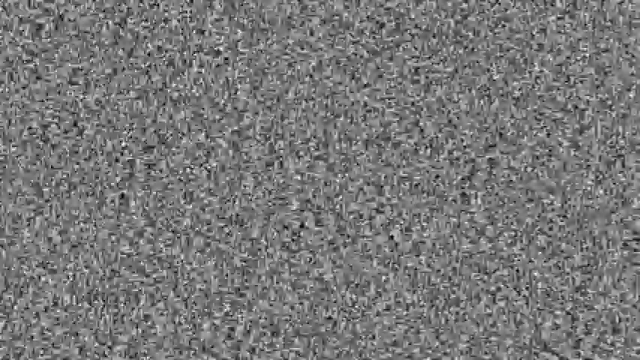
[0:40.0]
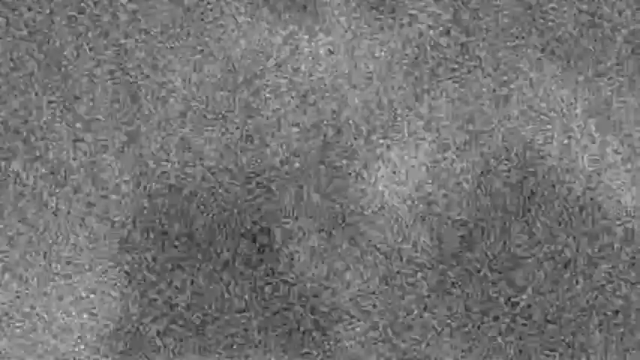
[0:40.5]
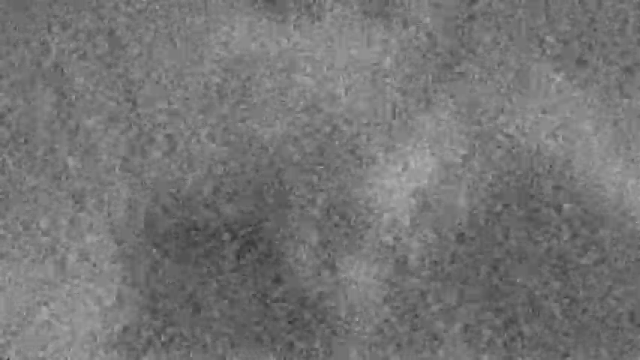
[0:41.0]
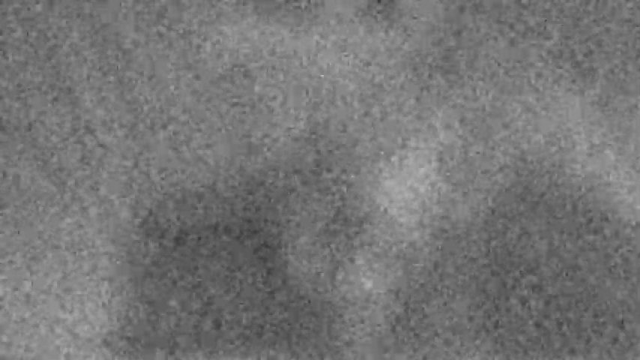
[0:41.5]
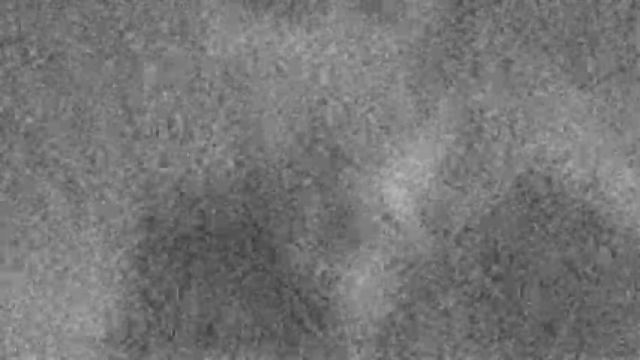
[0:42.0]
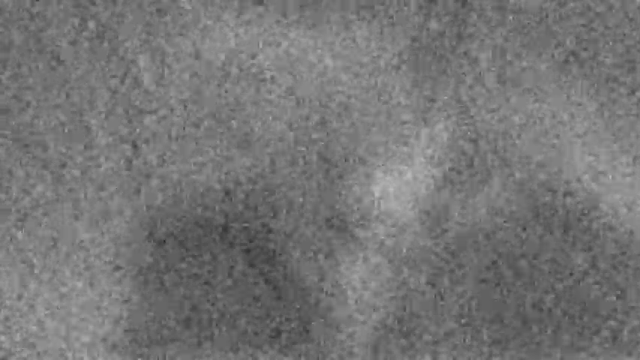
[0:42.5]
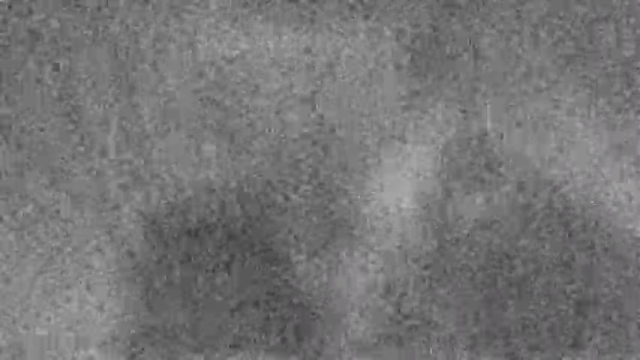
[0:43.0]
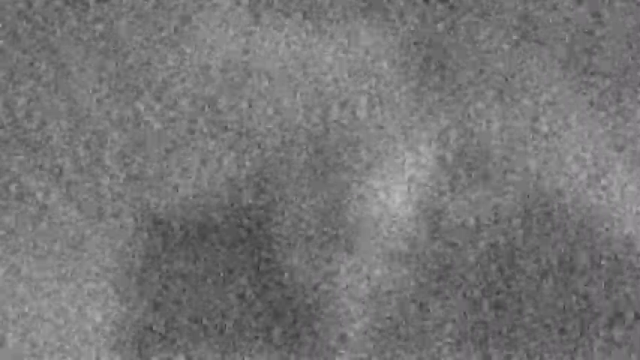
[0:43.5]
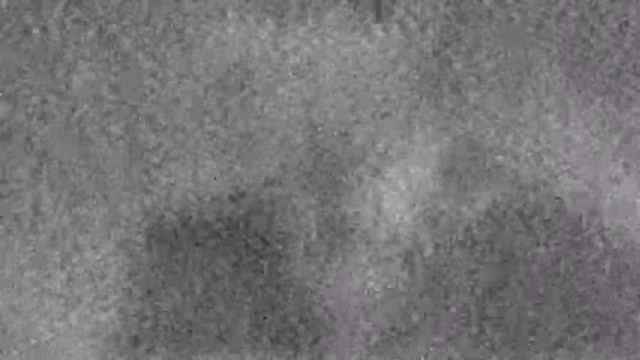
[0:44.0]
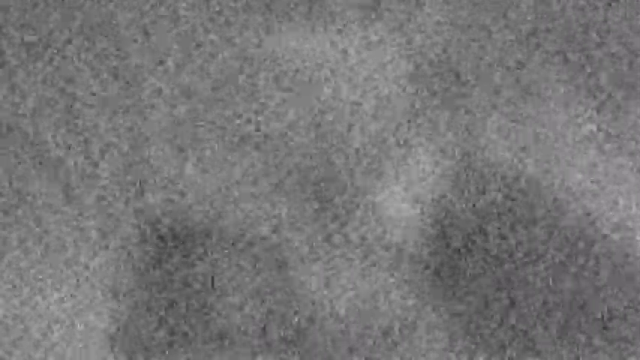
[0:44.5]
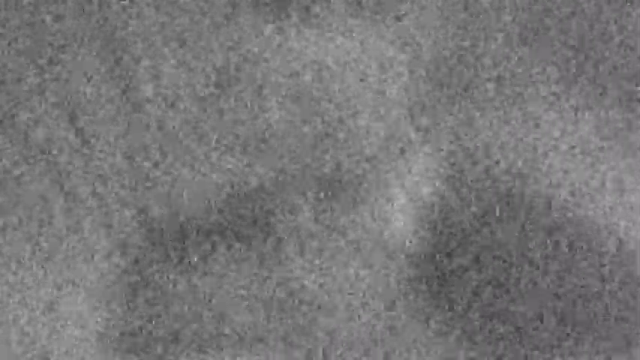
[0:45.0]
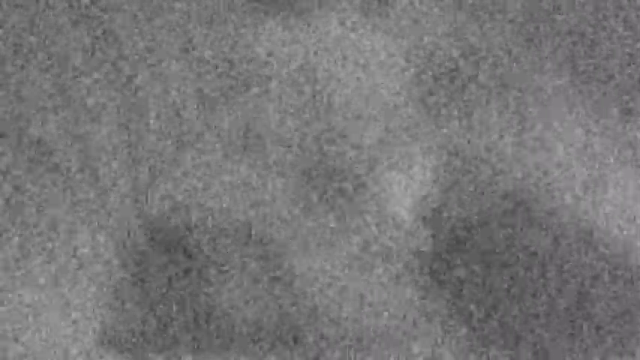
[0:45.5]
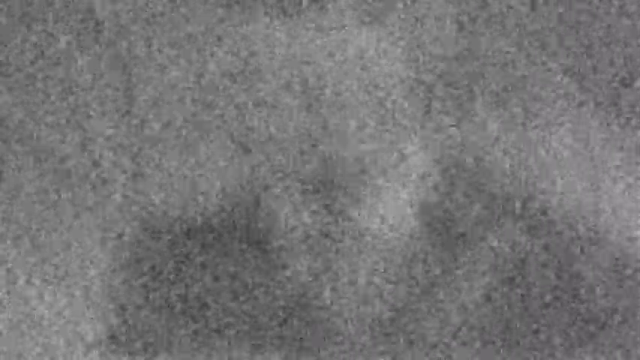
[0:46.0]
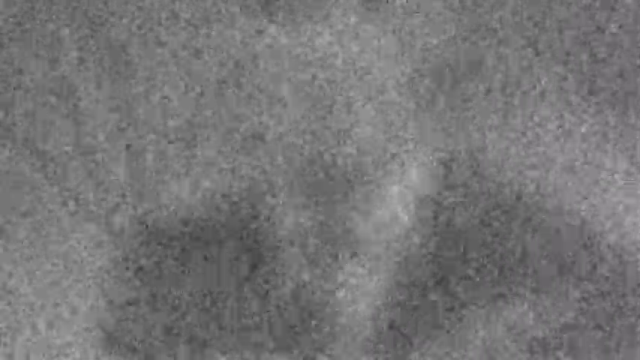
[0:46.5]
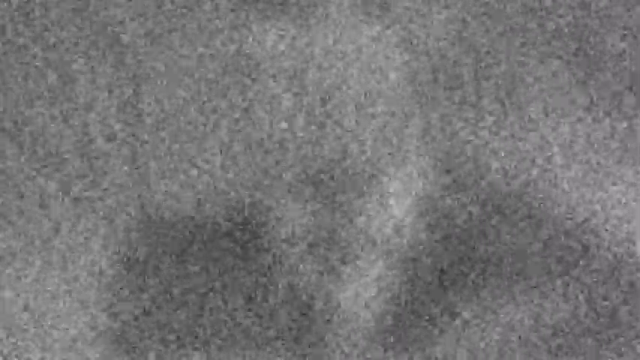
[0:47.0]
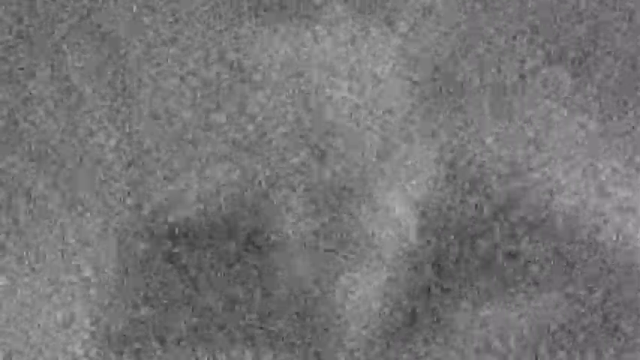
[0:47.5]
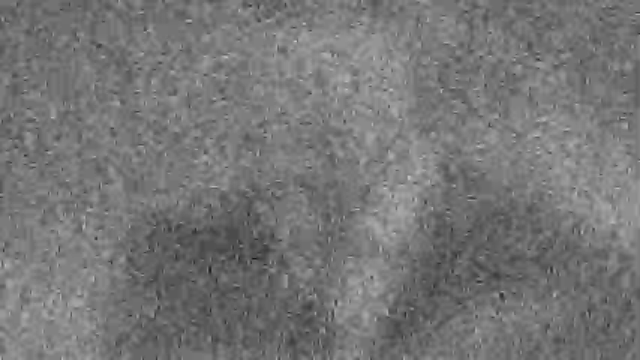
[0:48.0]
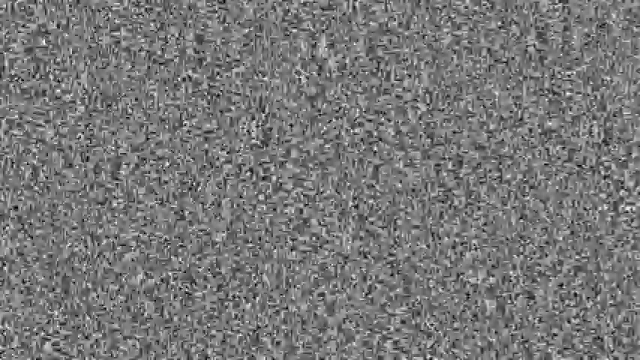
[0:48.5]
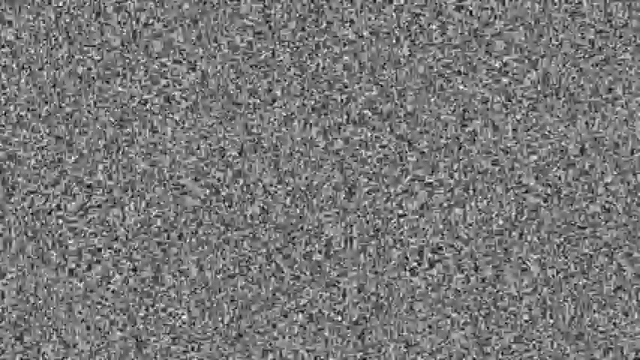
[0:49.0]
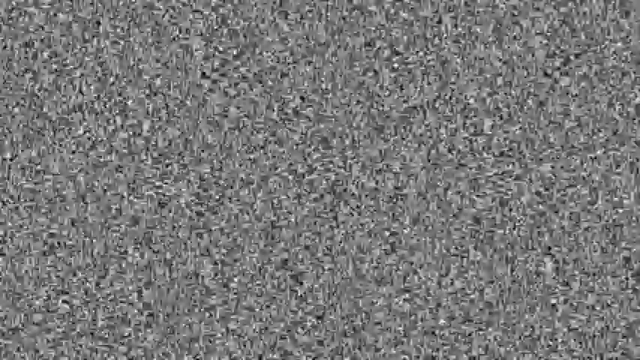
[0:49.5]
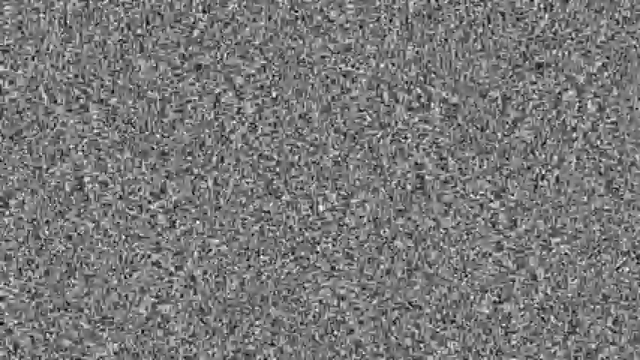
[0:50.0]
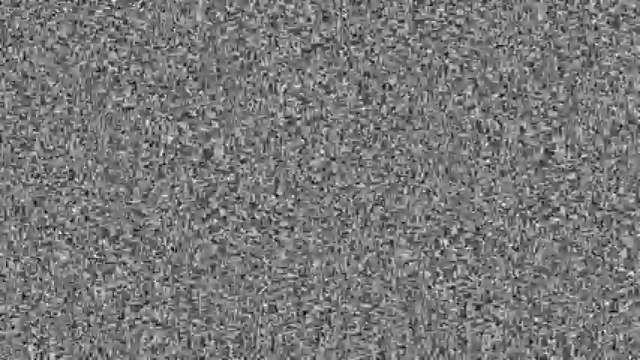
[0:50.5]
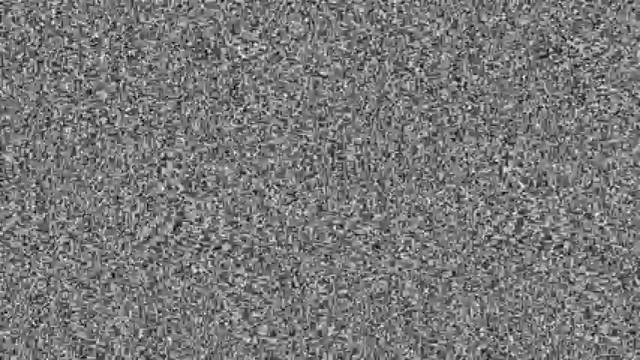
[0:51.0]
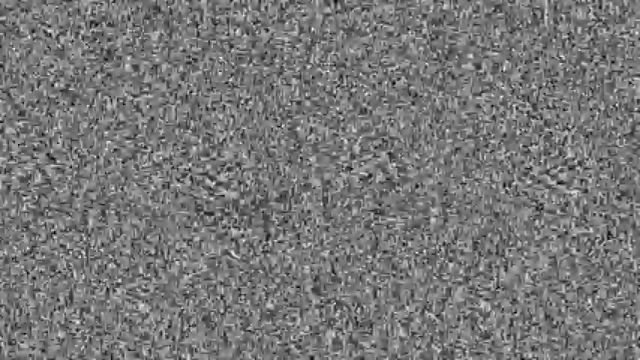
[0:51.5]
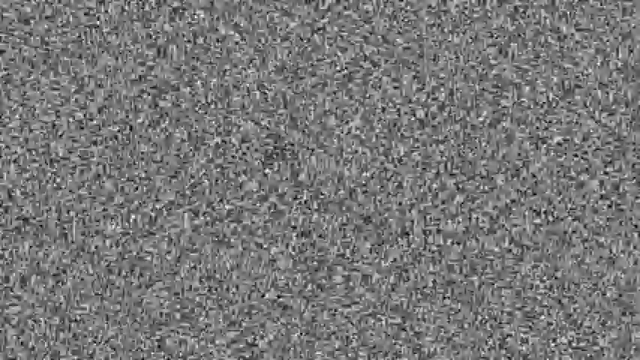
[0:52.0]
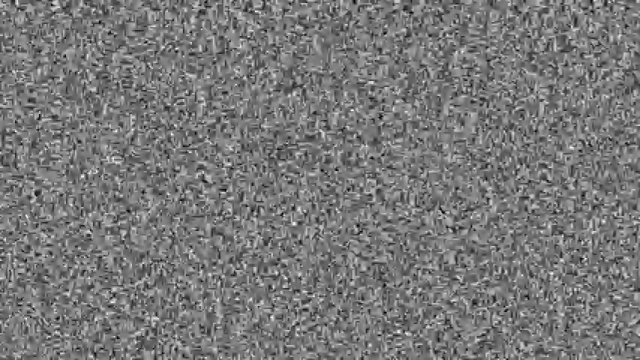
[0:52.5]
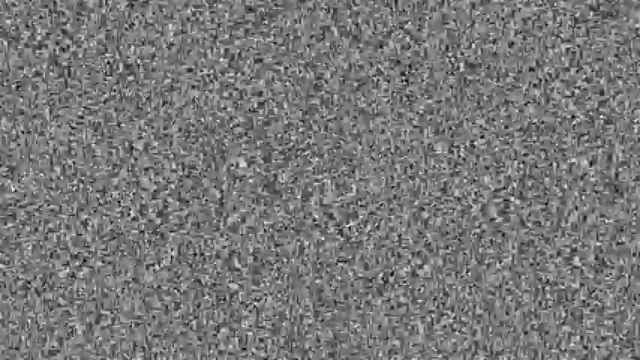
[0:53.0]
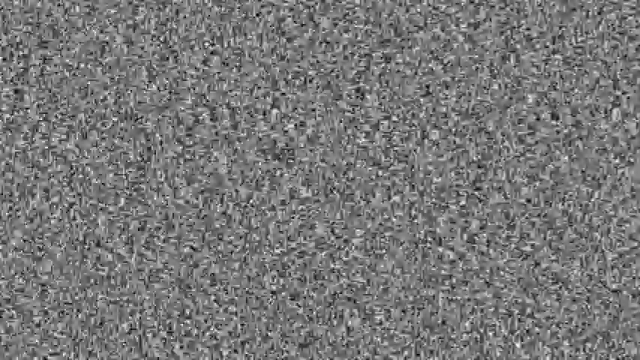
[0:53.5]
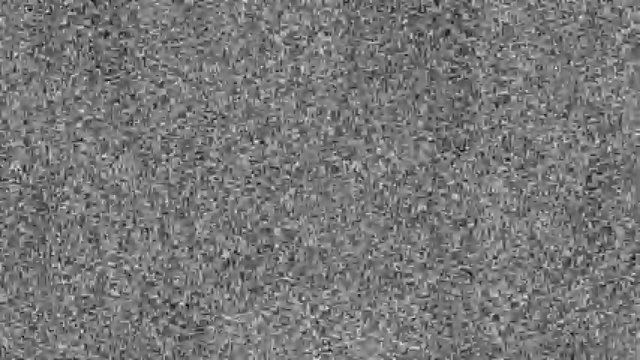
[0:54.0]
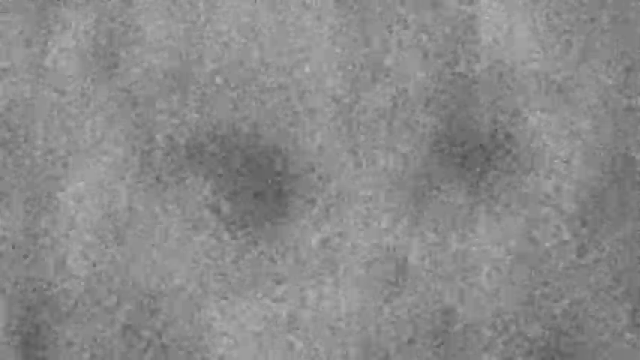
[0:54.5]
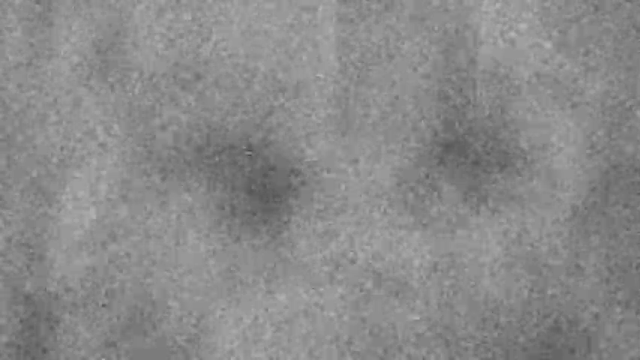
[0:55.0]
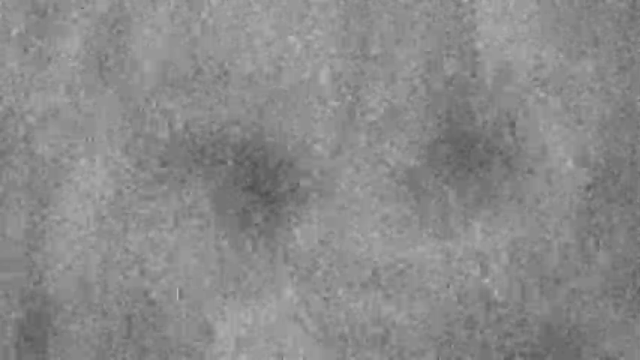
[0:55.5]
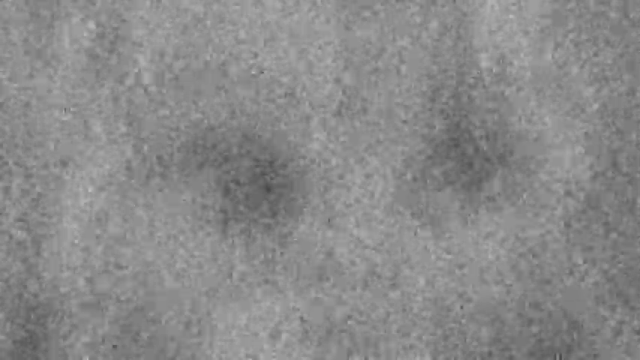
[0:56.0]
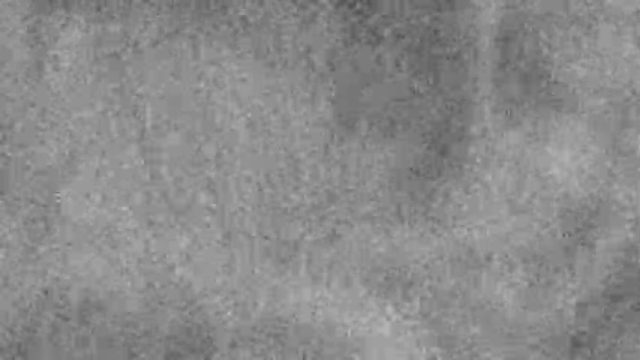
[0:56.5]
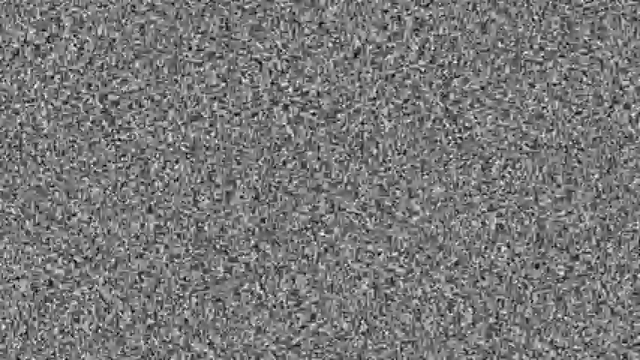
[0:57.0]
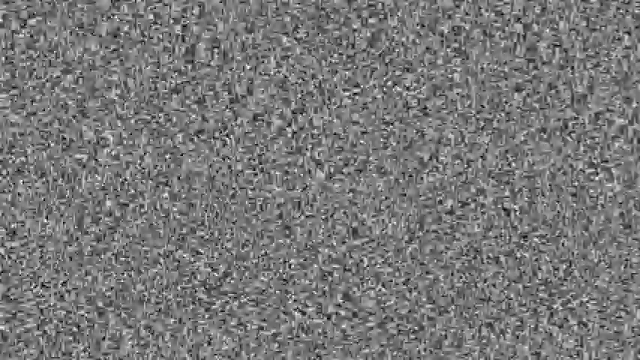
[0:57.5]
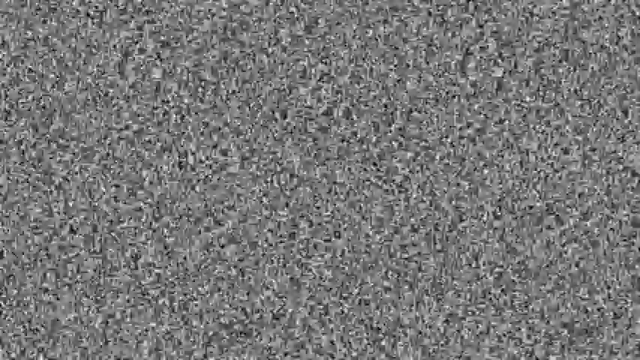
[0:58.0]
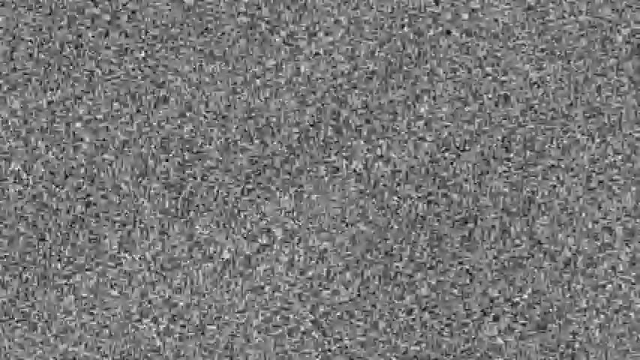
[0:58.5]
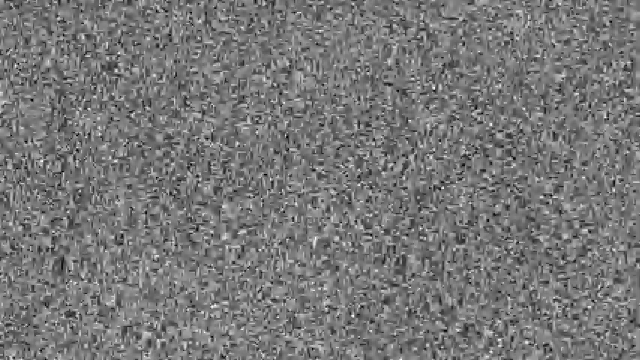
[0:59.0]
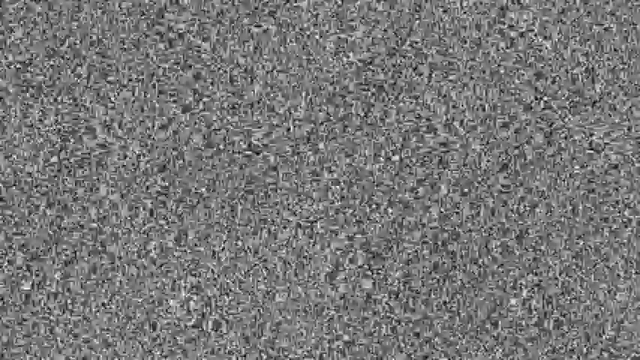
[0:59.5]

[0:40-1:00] The image starts as static and then stops, a gray still frame that looks like it is about to start moving back and forth. It picks up into static again, as if being tuned, and there seems to be a person or some type of figure in the background, its gender impossible to tell. The figure seems to be wearing some type of suit, briefly looking like a suit with a white shirt, and what almost looks like a head can be made out at the top before it fades away. The static becomes very dense, some numbers briefly appear that cannot be made out and fade away, and then two shadow-like spots appear and fade out. The static grows so dense and intense it is almost like a storm, then lightens up as if trying to tune into another image that cannot be made out. Near the end there seem to be two eyes that look similar to alien eyes.